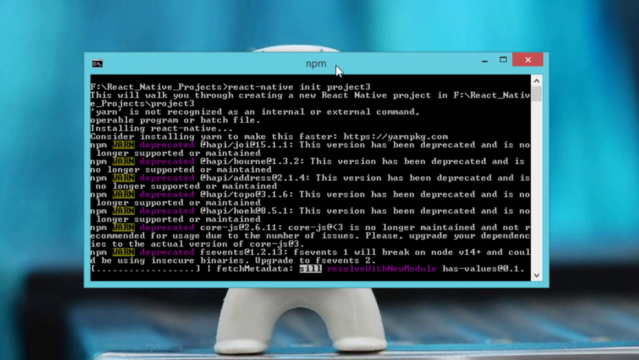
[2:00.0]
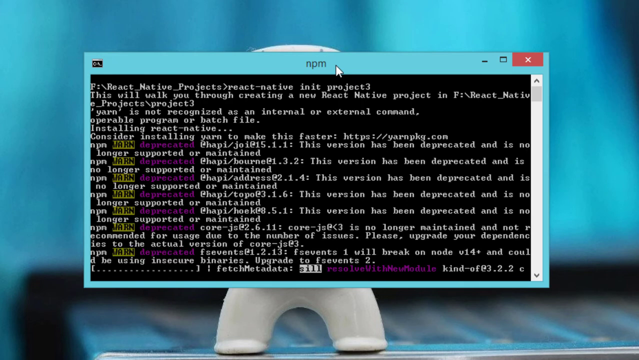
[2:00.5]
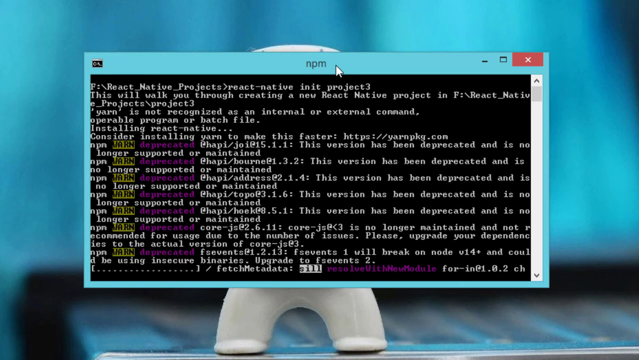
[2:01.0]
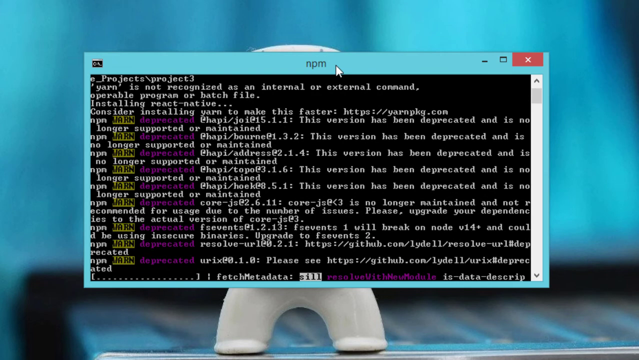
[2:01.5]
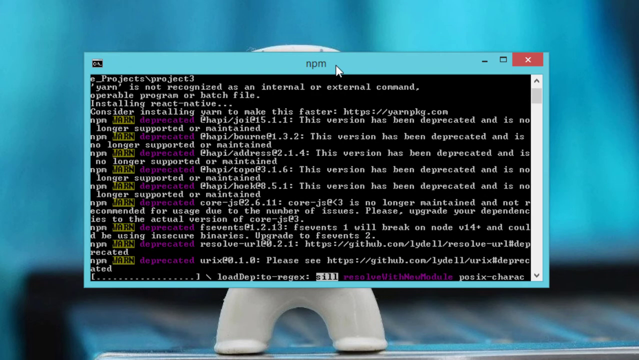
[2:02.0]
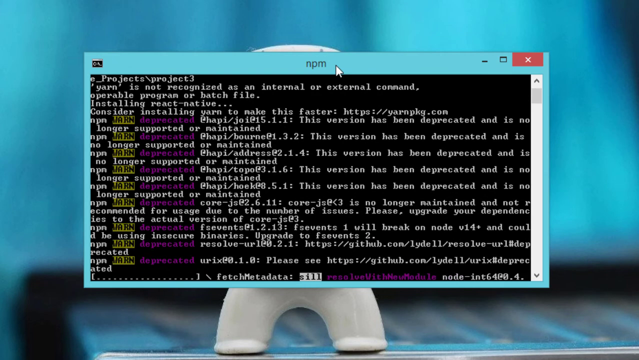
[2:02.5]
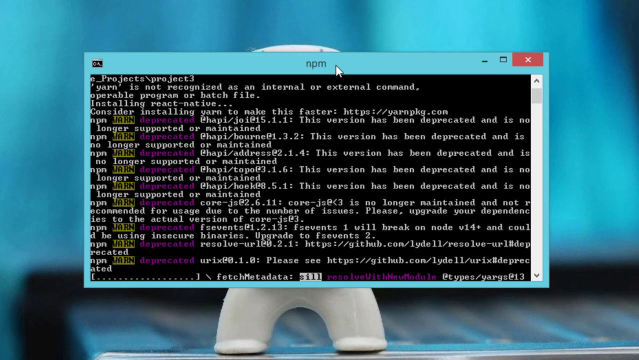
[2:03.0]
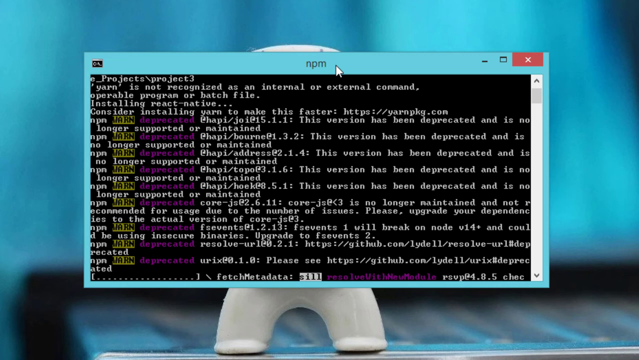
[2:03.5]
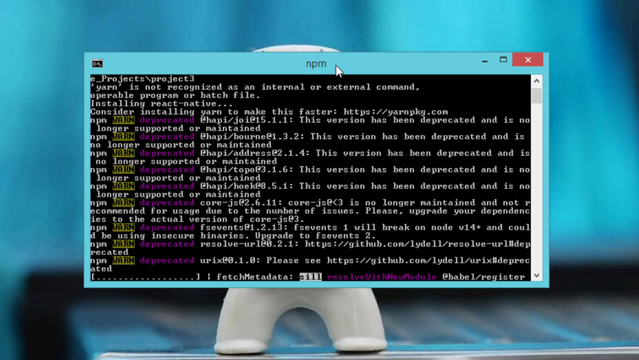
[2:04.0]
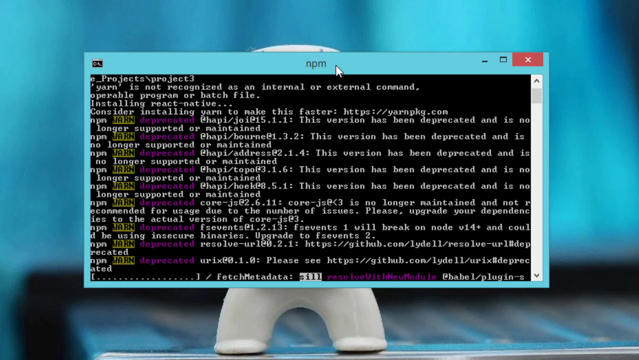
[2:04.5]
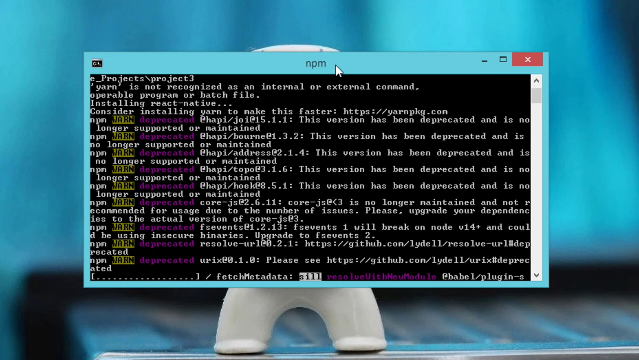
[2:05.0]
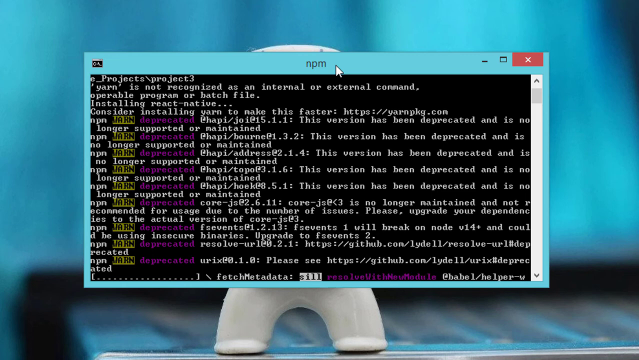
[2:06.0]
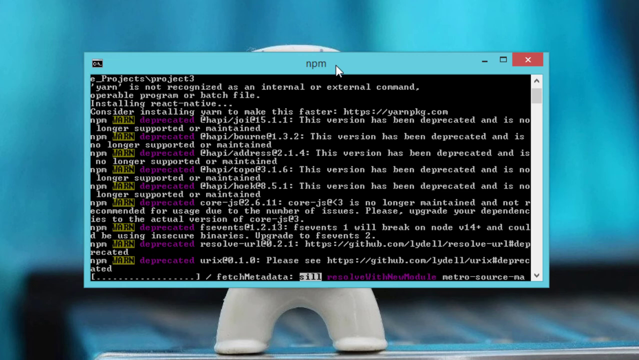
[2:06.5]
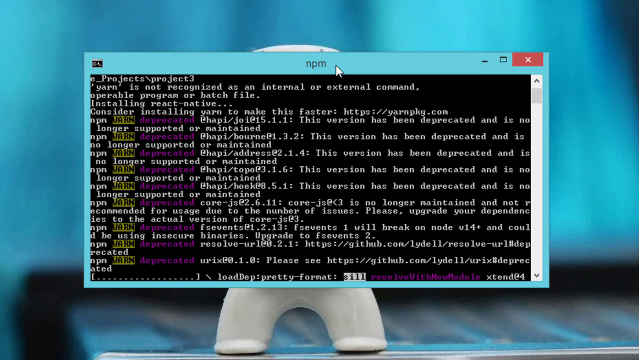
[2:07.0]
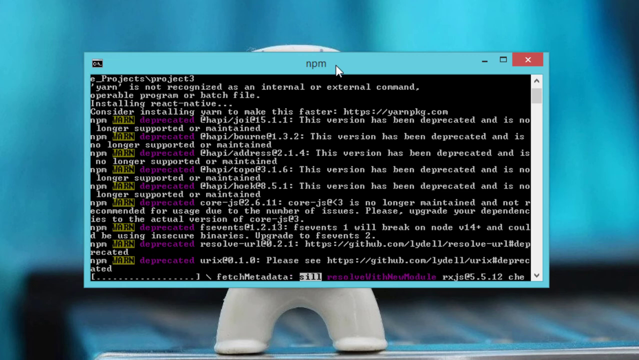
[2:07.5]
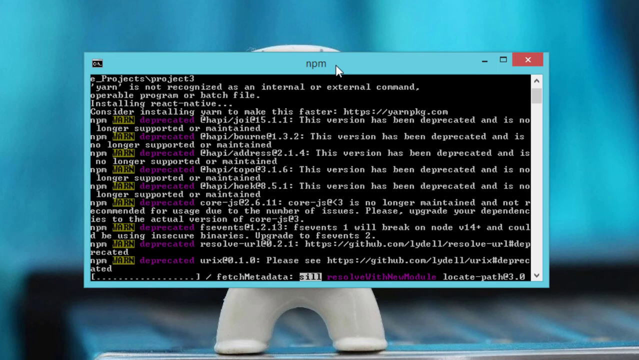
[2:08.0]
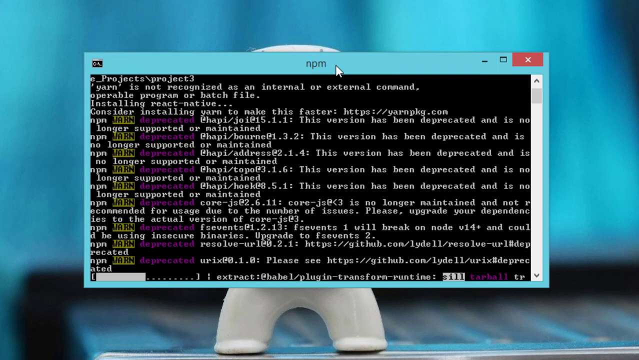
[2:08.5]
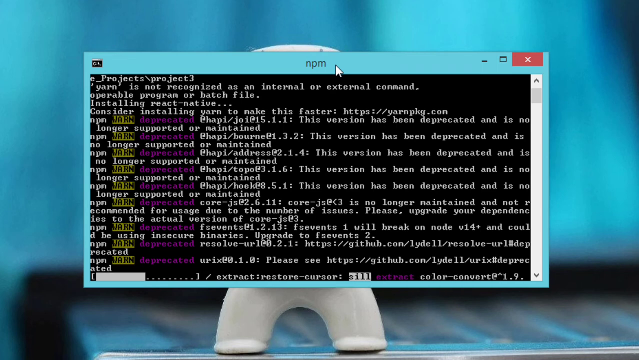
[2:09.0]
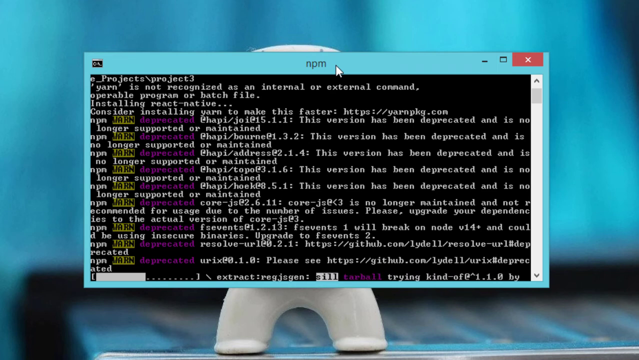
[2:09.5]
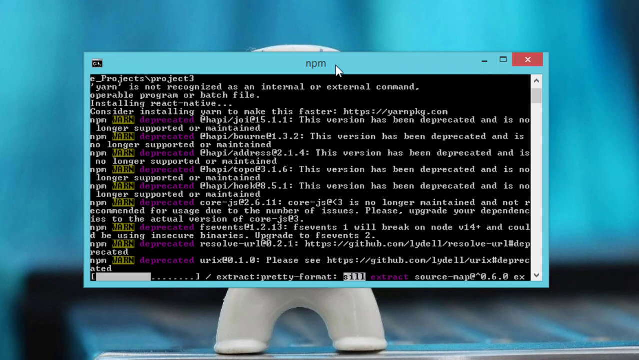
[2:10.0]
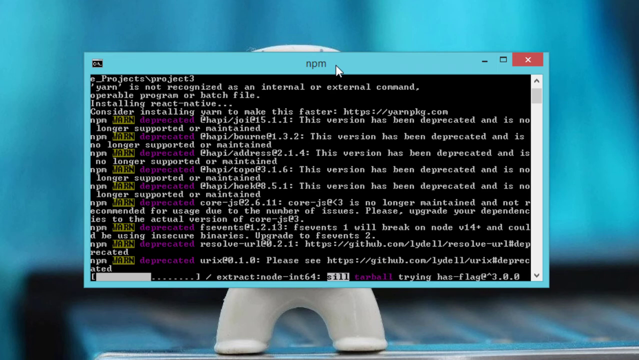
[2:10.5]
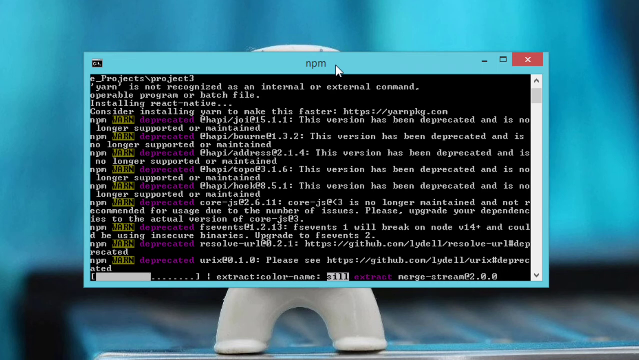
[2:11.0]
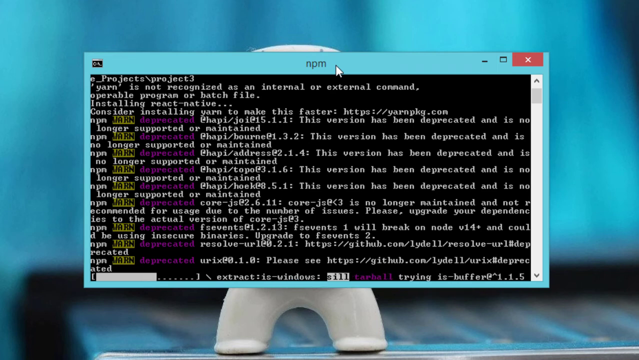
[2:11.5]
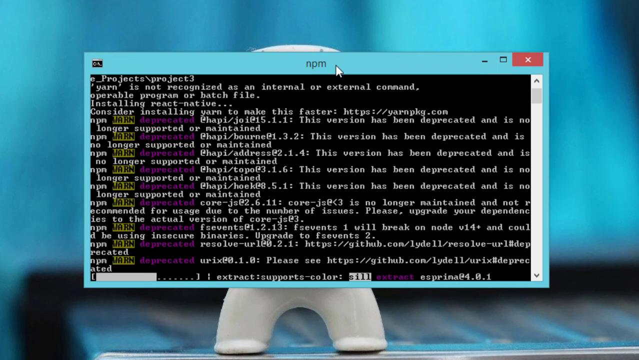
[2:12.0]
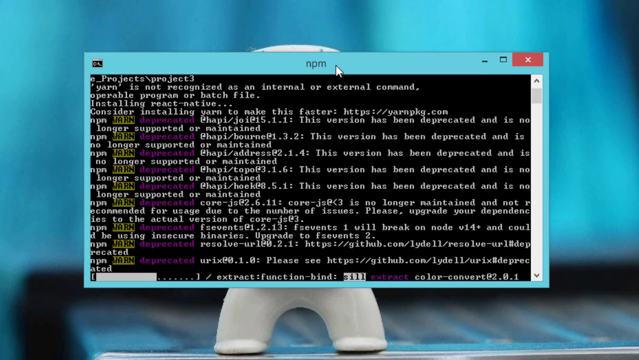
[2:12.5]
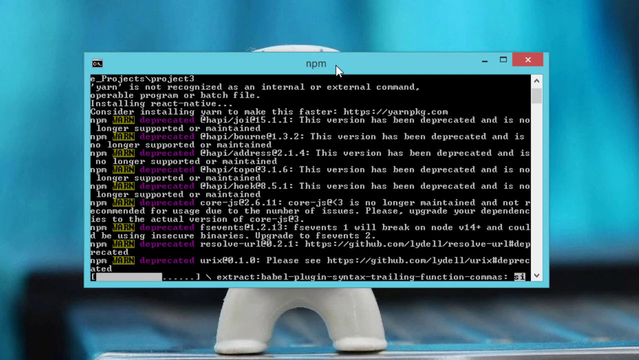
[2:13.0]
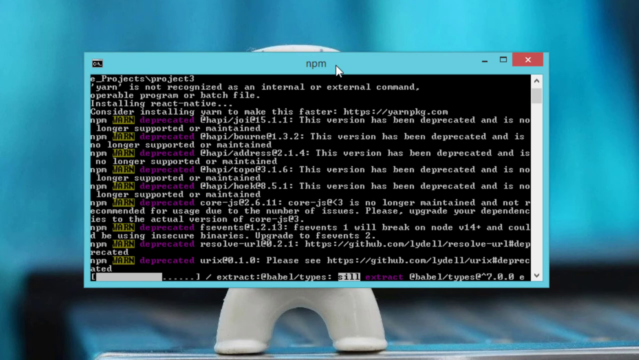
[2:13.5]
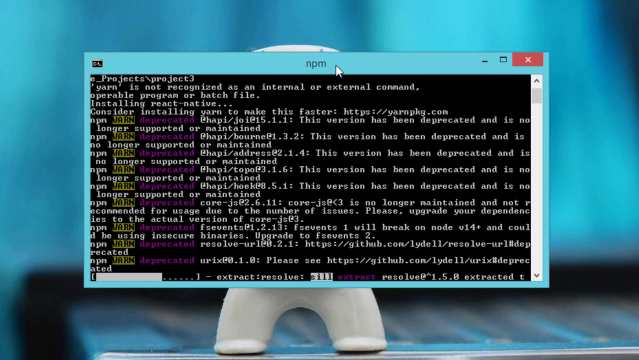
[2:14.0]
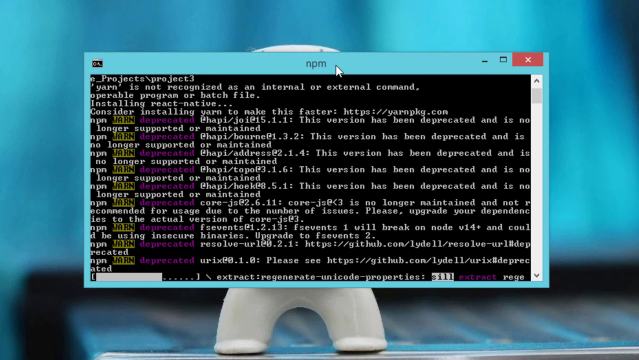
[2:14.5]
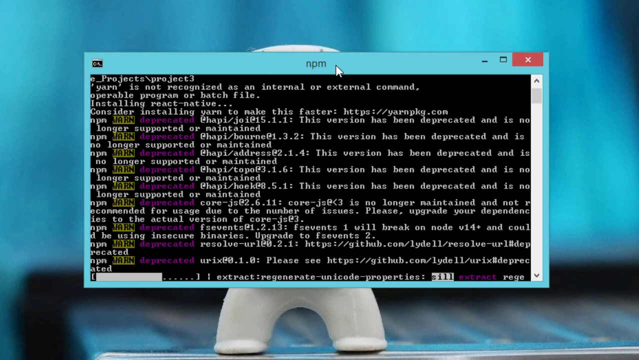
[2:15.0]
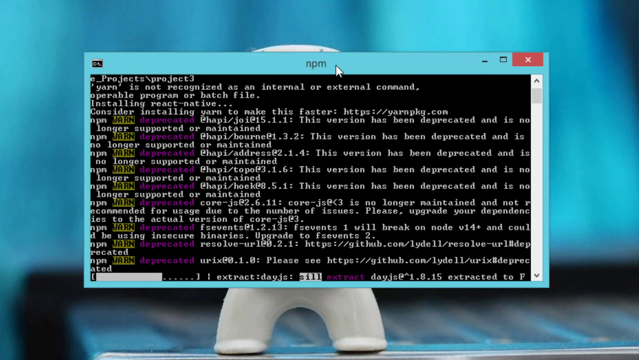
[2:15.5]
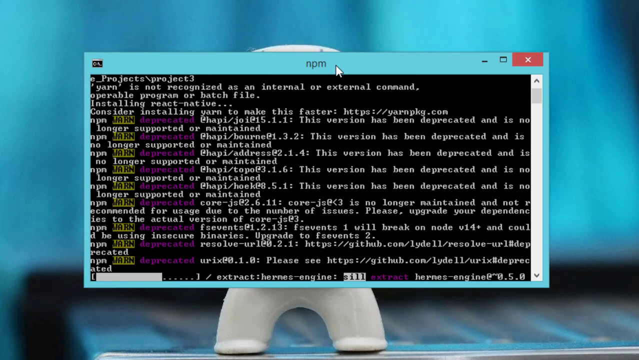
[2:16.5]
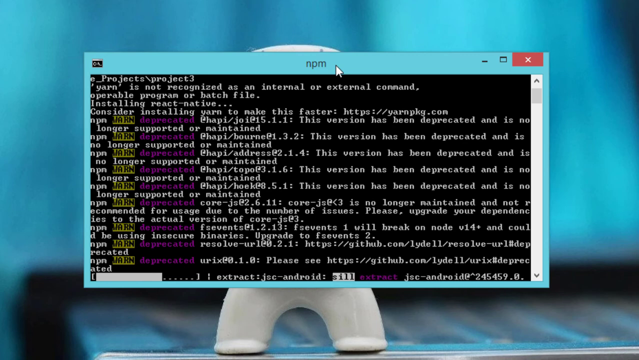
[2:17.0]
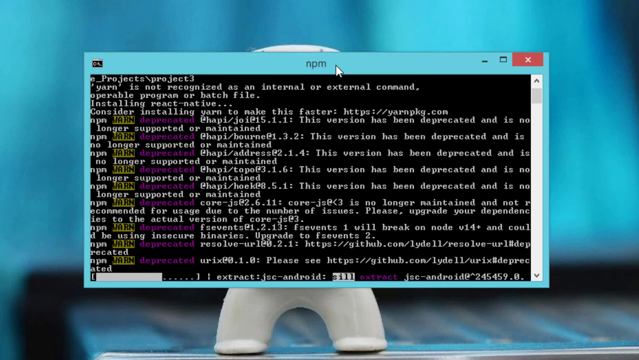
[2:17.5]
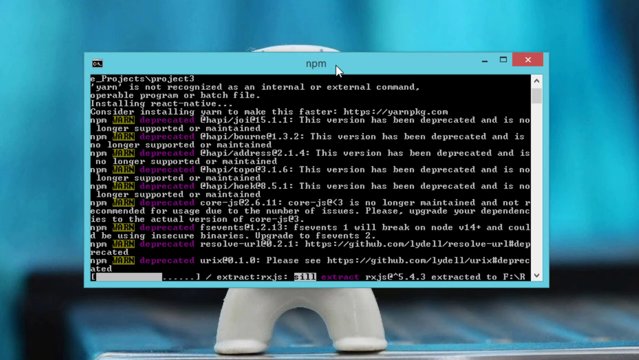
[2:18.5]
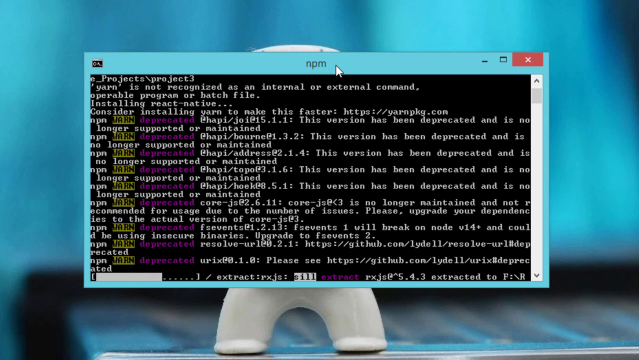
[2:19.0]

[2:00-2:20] In the react-native-projects folder, the user types the react-native init project3 command to create a new React Native app called project3. React Native starts the setup and says it will guide the process. It first tries to use yarn but shows a message that yarn is not recognized, so it switches to npm. Npm shows warnings that a few packages are deprecated, but the project continues to be created. React Native version 0.62.1 is installed before setup continues.